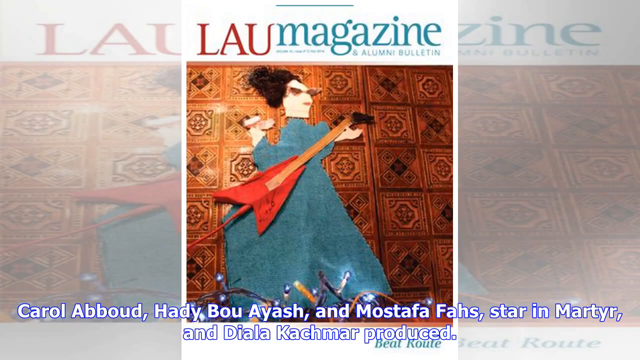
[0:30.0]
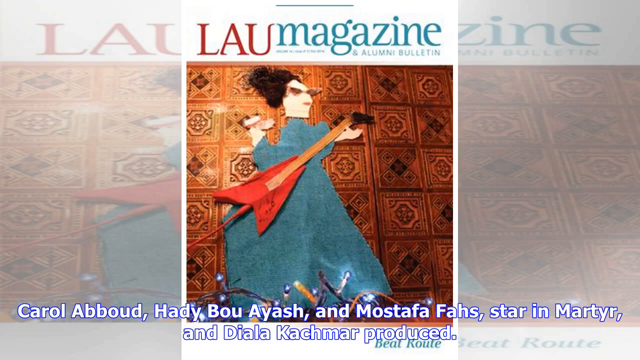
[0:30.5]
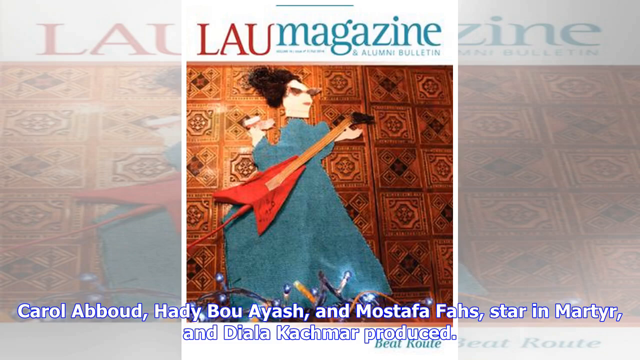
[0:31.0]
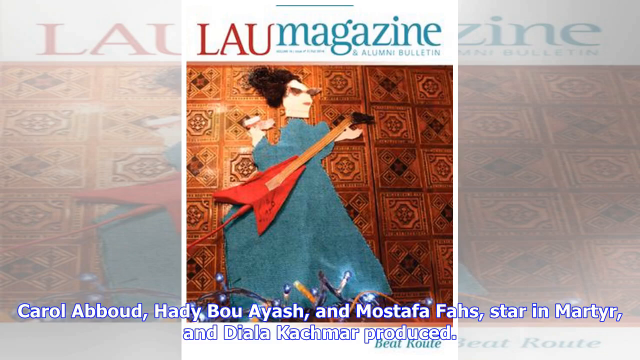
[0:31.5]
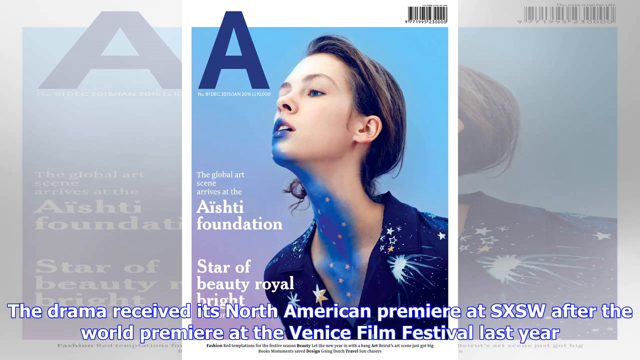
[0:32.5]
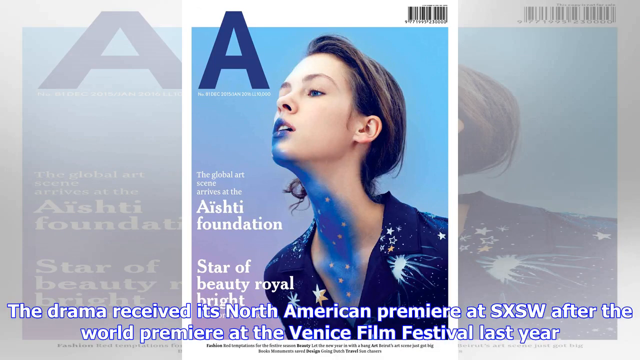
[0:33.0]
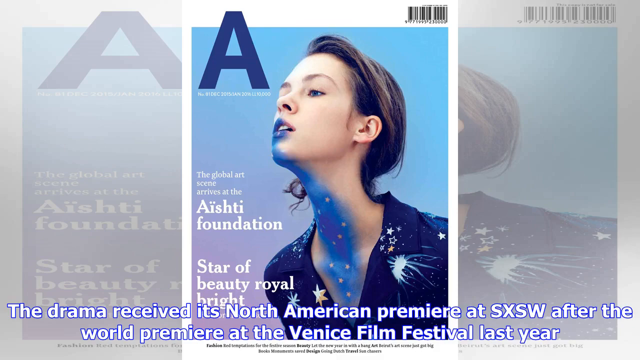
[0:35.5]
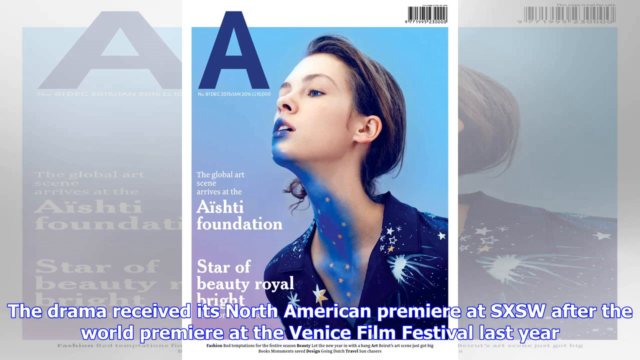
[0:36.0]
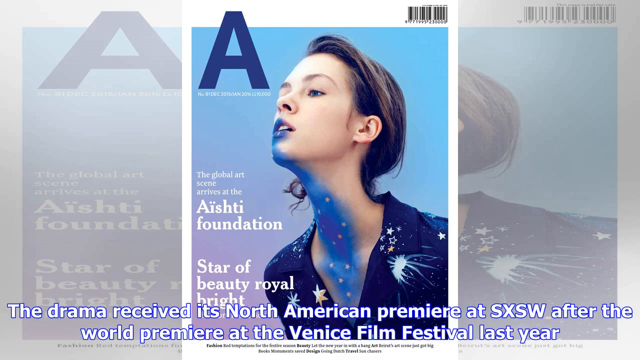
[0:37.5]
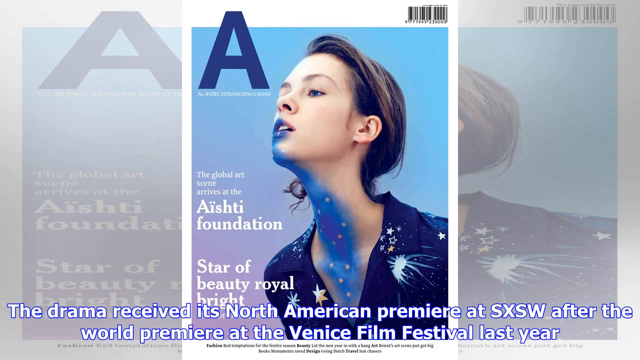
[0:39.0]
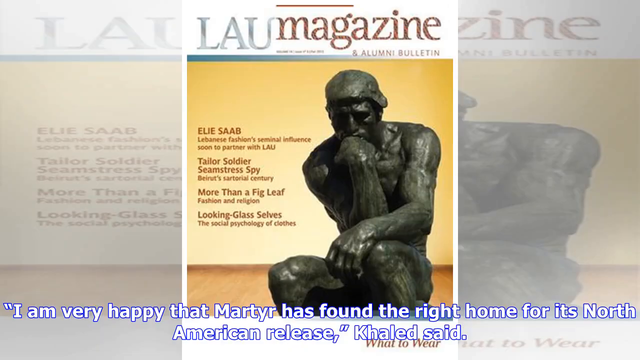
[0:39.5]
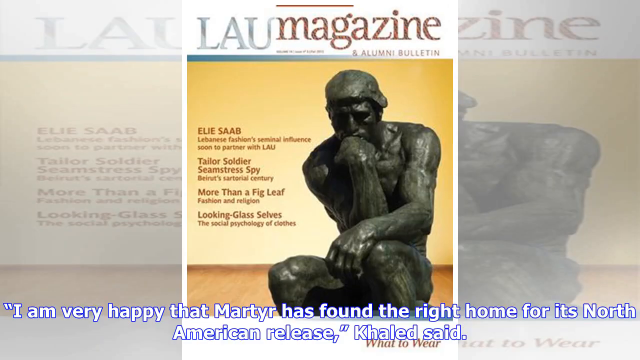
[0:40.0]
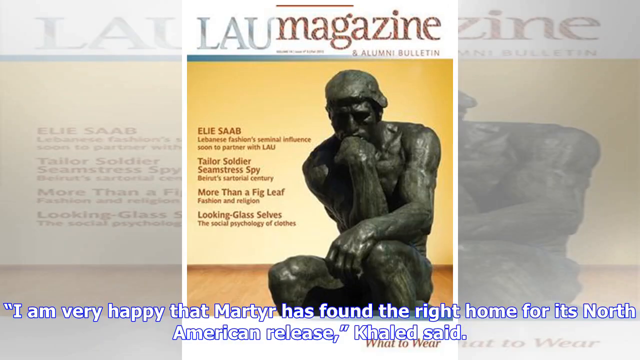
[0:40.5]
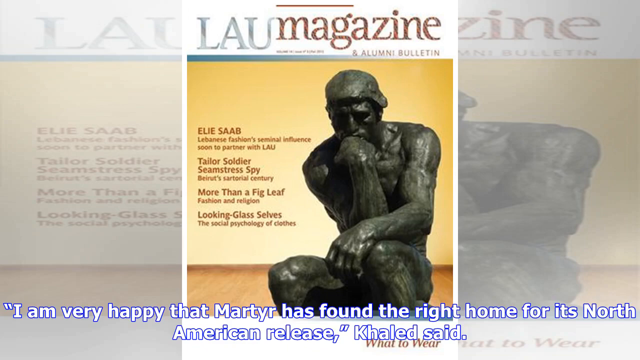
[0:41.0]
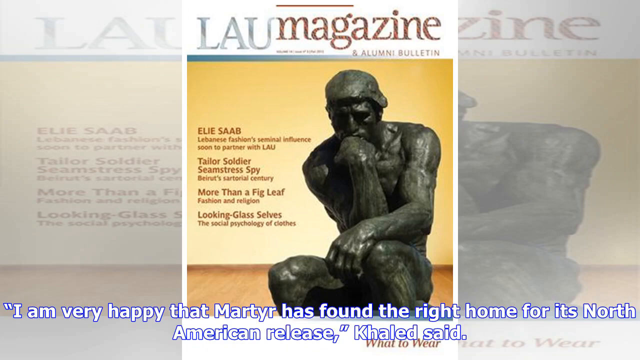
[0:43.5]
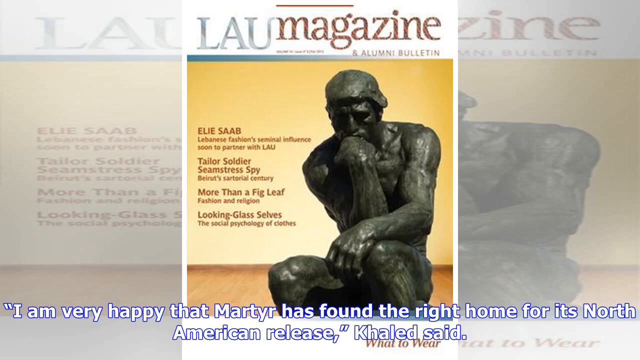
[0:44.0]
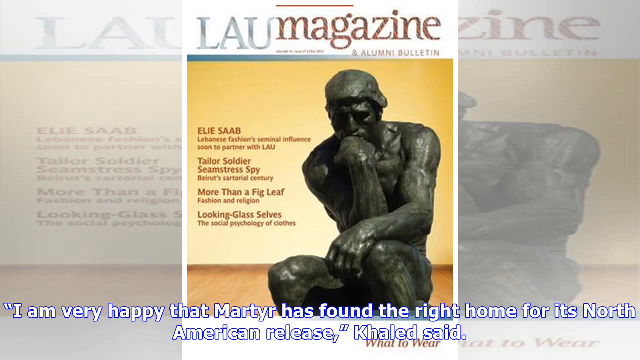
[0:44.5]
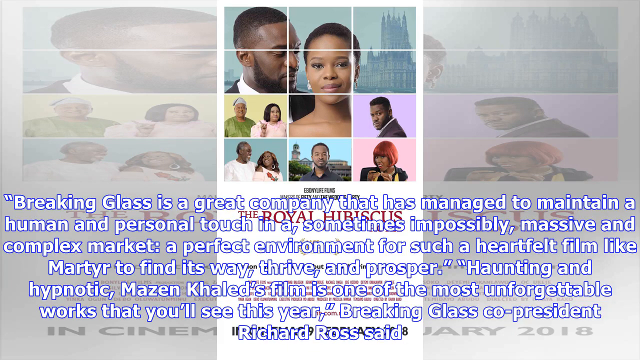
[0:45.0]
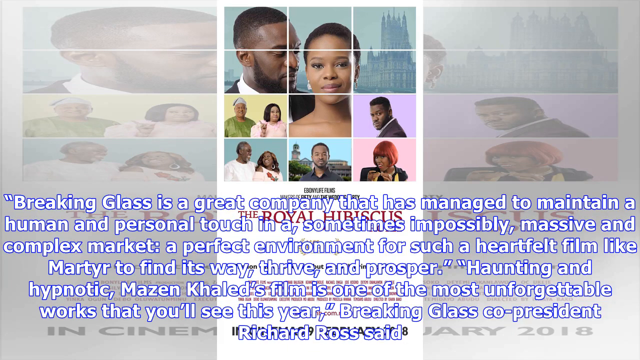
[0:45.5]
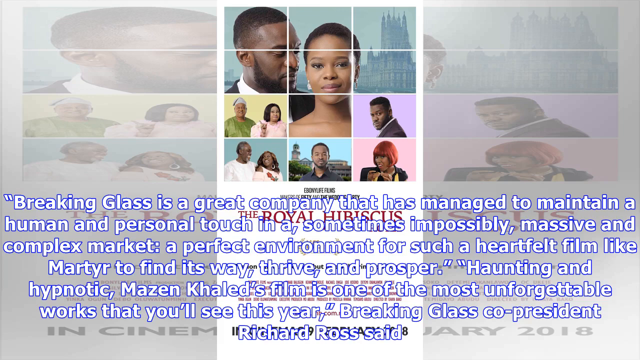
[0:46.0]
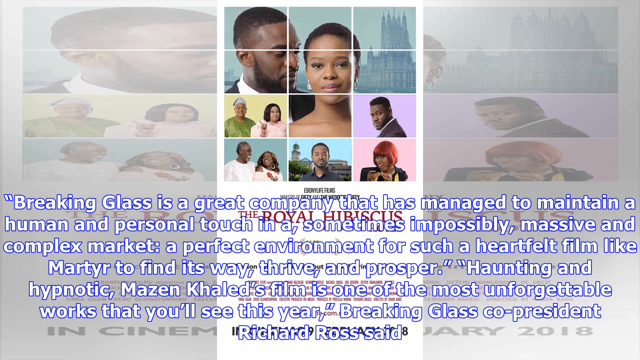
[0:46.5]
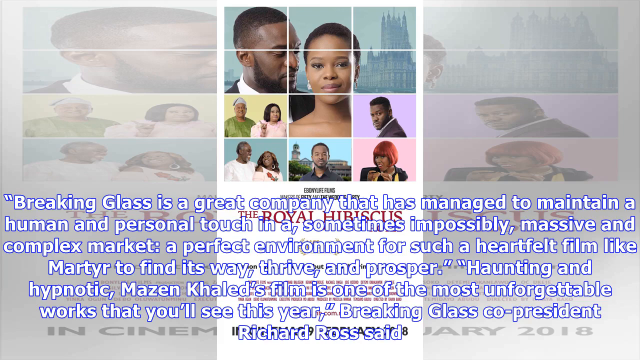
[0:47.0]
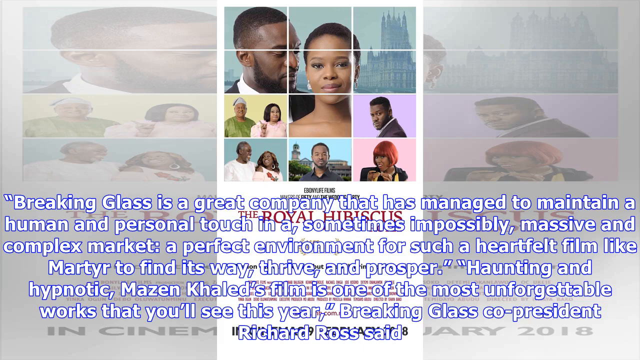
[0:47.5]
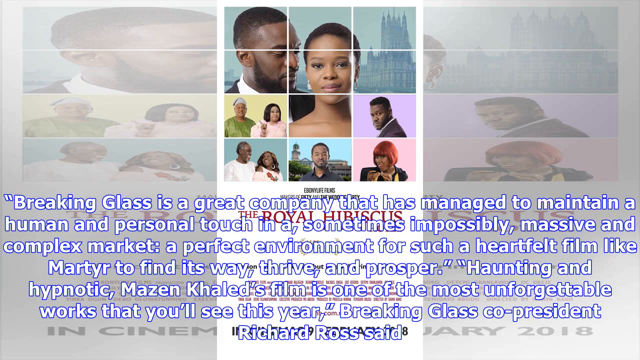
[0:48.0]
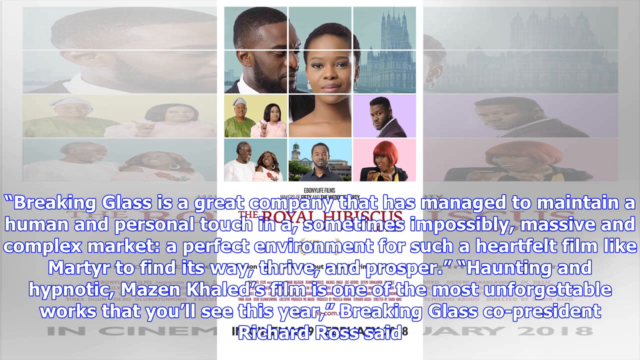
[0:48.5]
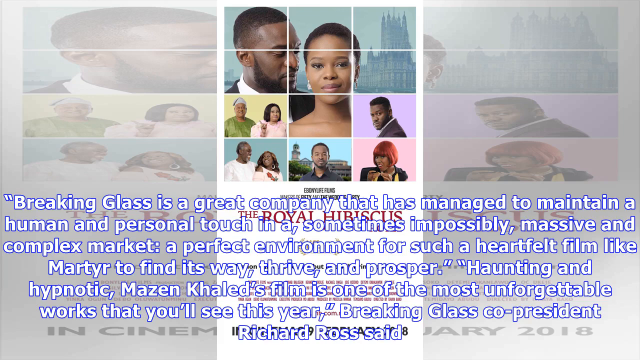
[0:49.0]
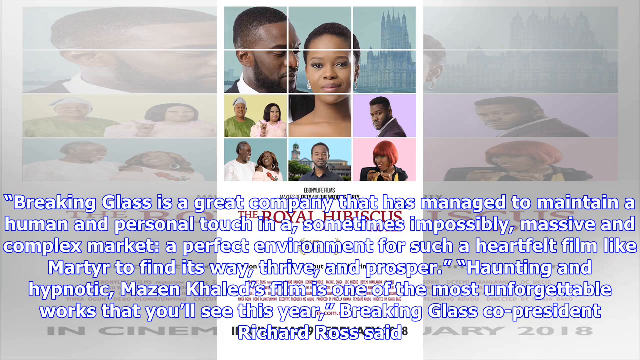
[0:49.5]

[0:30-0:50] A magazine is in the middle of the screen. The cover says "LAU Magazine, an alumni bulletin," and shows a green cloth laid on the ground with a wig on top and cut-out glasses, which looks like an attempt to create a figure on the ground. There is a fake guitar made from cloths. Captions at the bottom list people starring in the movie Martyr. The video cuts to text on the bottom of the screen that reads: "the drama received its Northern American premiere at South by Southwest after the world premiere at the Venice Film Festival last year." It then cuts to another magazine labeled "LAU Magazine" with a statue of the Thinking Man on the cover, a gray, dark gray figure that is thinking. The cover text includes "seamstress, spy, more than a fig leaf." Text reads: "I am very happy that Martyr has found the right home."